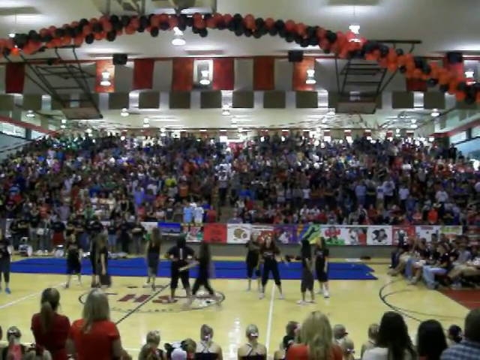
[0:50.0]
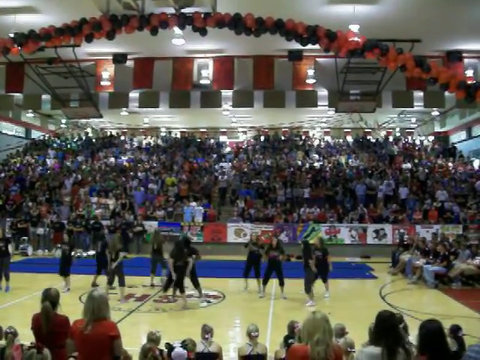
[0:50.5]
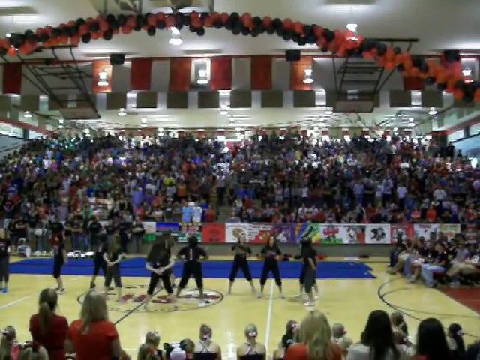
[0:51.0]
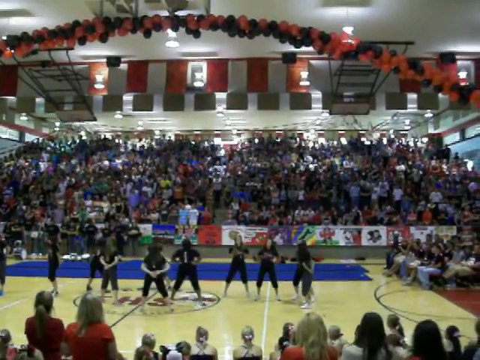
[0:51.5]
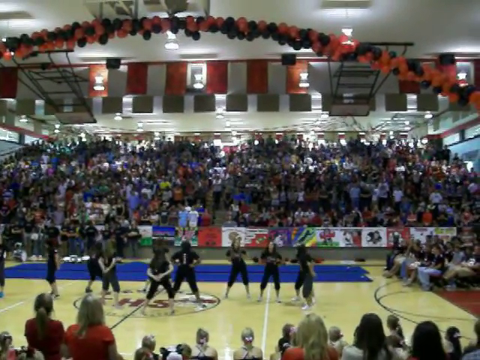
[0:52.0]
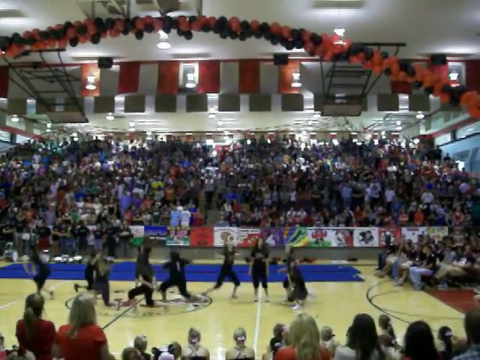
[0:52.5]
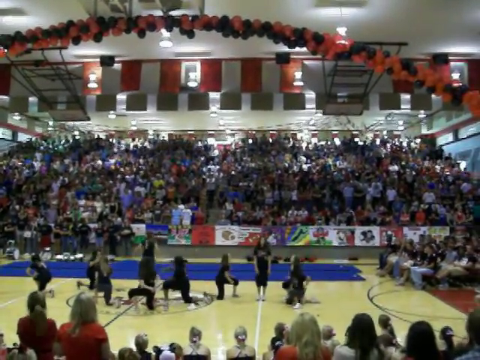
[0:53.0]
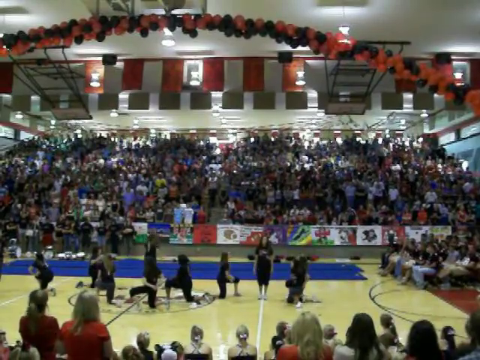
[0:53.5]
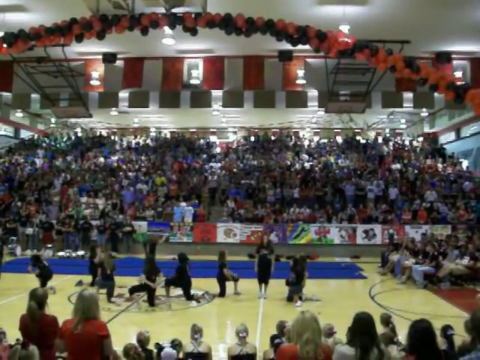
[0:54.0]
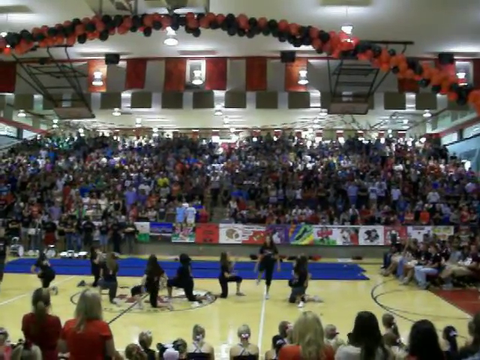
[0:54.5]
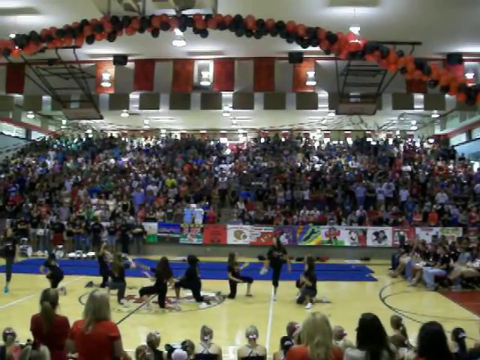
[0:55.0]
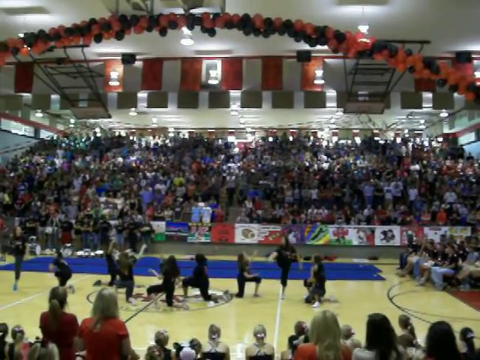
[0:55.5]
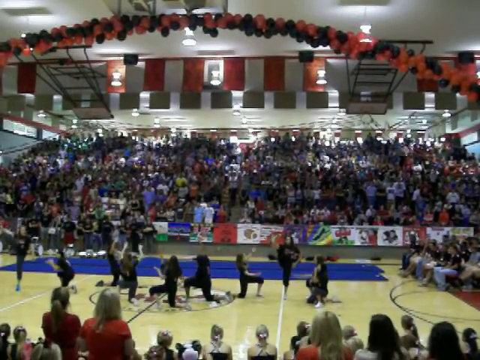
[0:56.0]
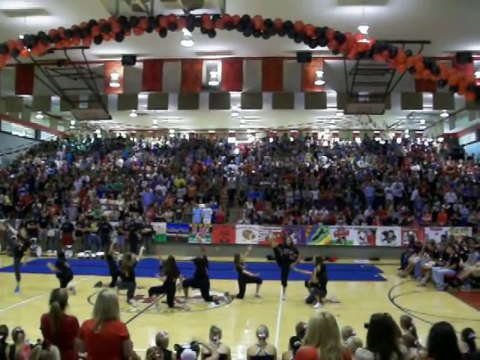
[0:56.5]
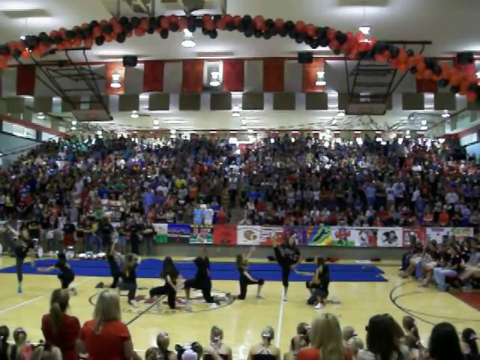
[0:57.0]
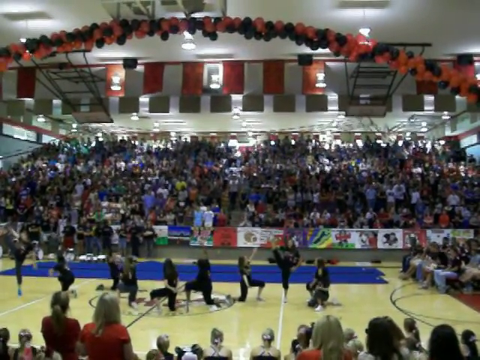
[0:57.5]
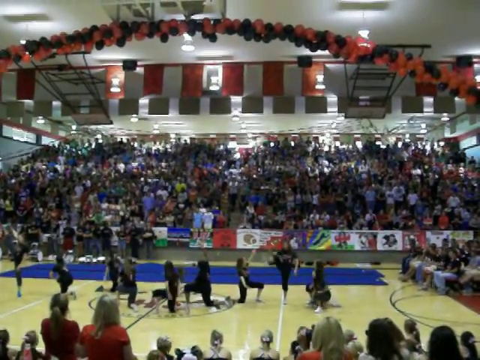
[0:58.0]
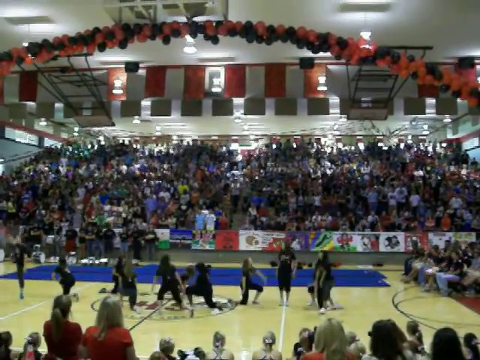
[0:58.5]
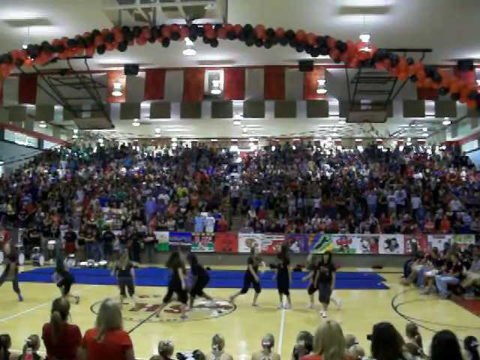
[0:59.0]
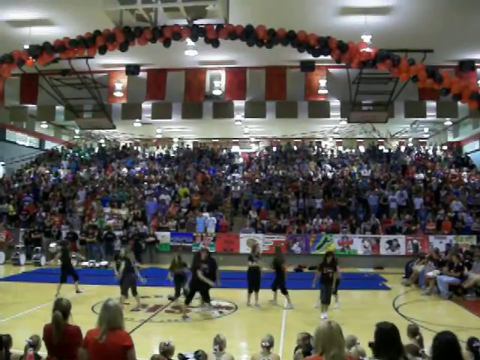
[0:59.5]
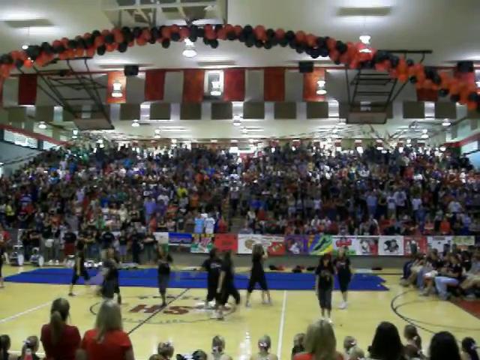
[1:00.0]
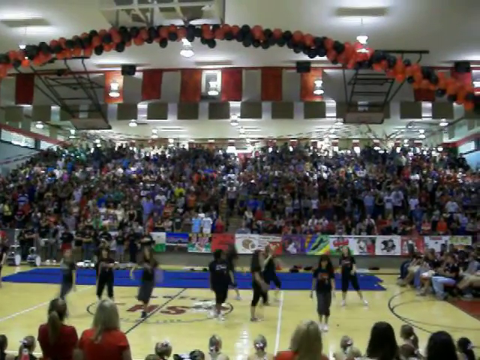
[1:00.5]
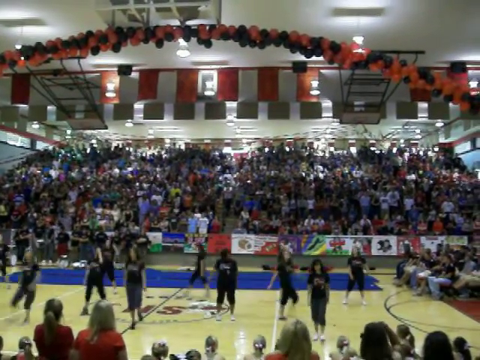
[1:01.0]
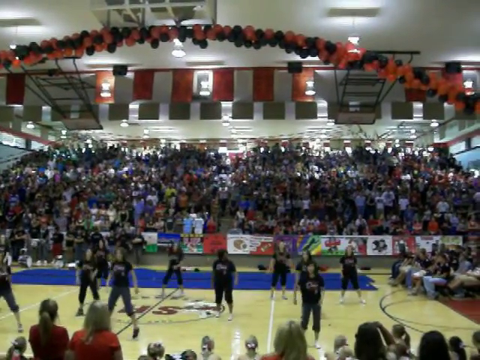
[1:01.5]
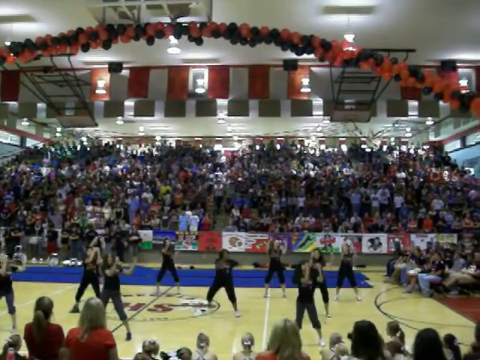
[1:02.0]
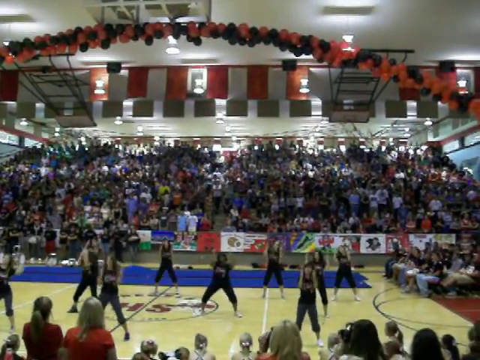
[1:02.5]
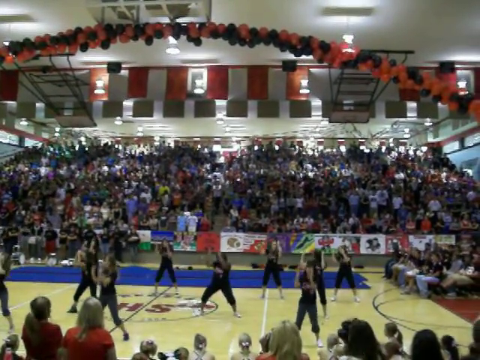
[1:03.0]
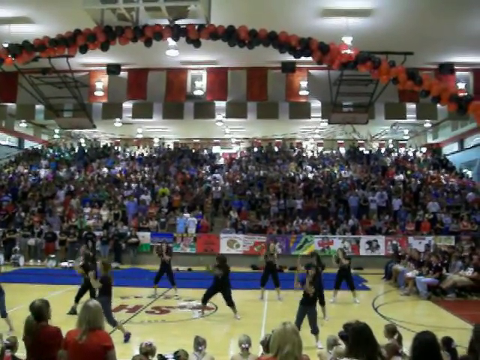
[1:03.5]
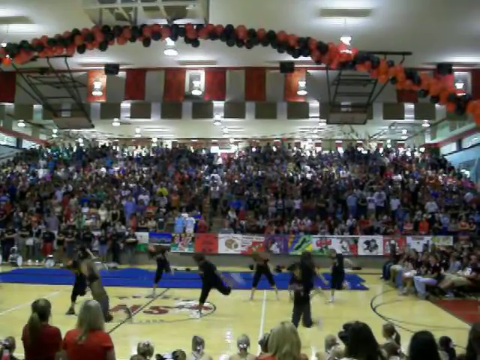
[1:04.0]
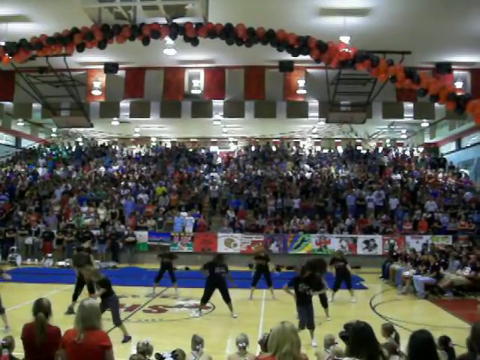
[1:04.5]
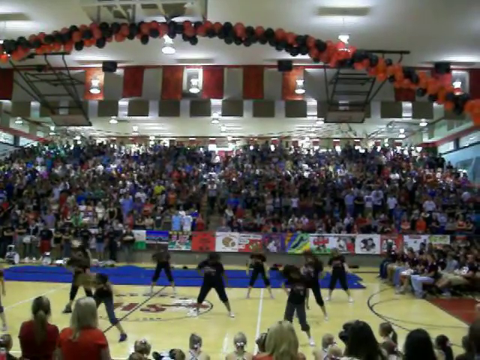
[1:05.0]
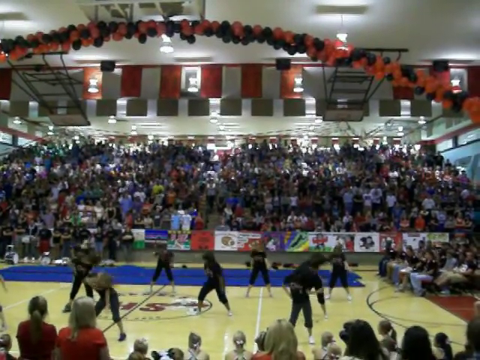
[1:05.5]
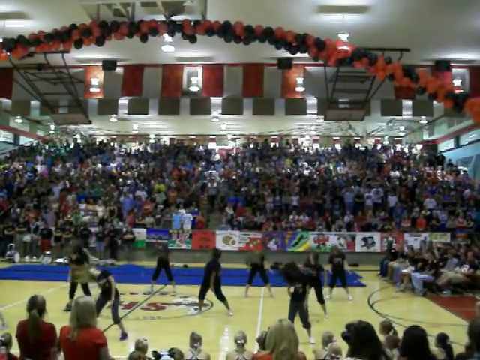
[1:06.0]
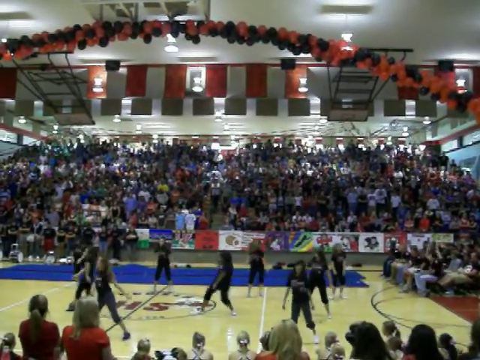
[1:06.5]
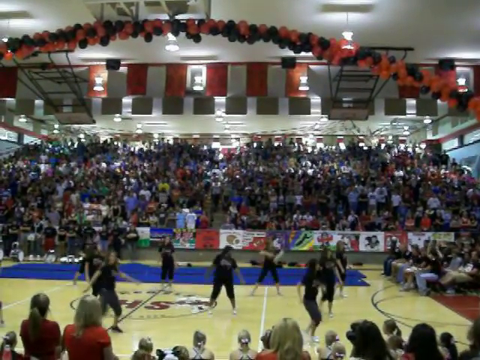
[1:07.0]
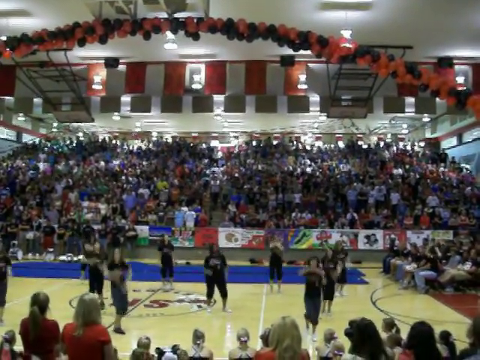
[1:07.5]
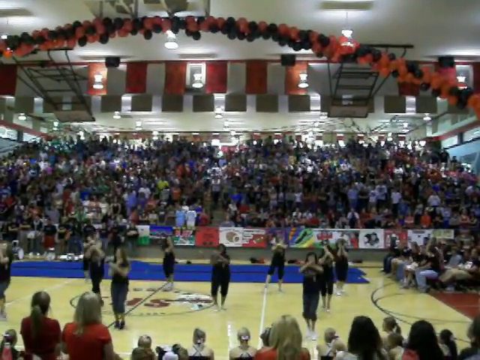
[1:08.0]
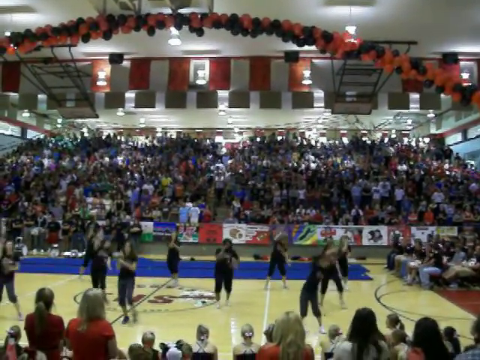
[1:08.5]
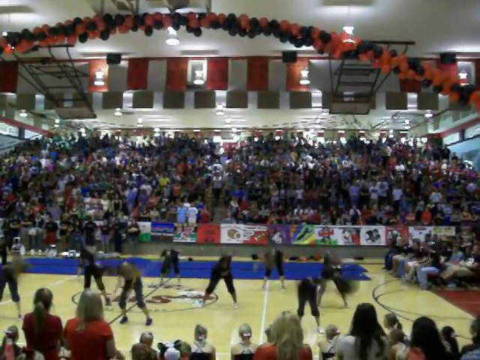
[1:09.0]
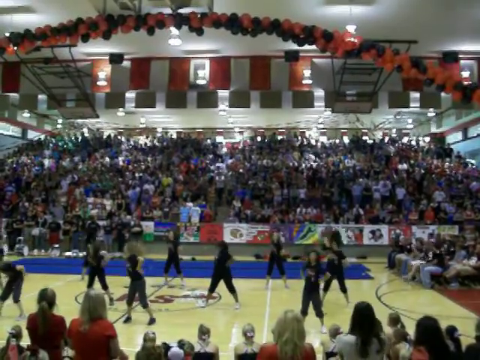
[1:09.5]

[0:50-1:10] What appears to be a cheerleading team, pep squad or dance squad performs in a gym. The women, apparently about 10 or a dozen, start in a loose circle and sort of dance around a little, facing each other, then move into a different formation. Finally they all swing their heads and hair. There appear to be a few hundred attendees, a balloon arrangement hangs from the ceiling, and a few people sit on the court, suggesting perhaps a pep rally or an assembly. A logo is on the hardwood court, though the team's name cannot be read.